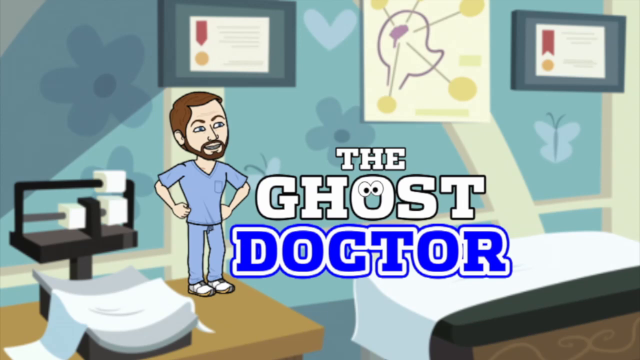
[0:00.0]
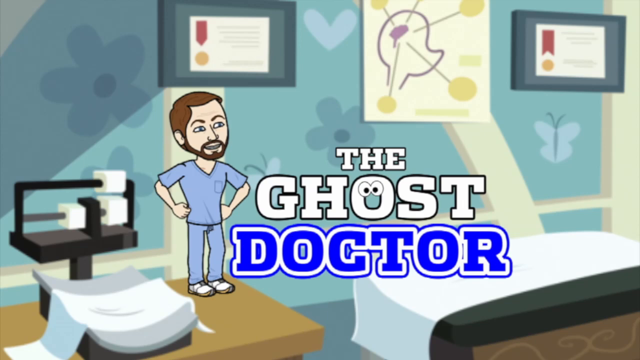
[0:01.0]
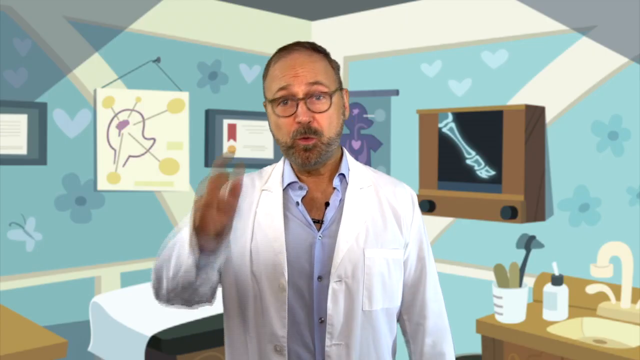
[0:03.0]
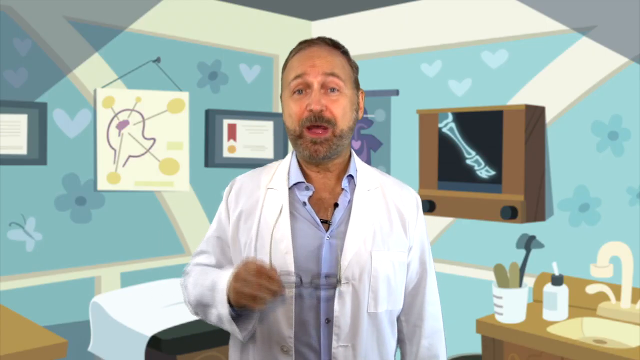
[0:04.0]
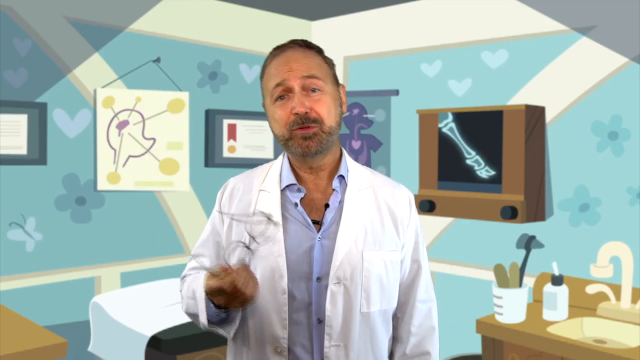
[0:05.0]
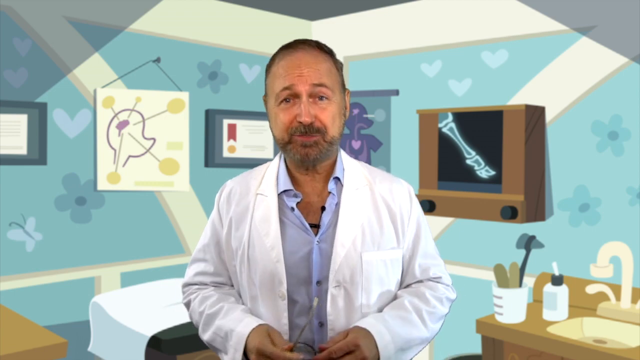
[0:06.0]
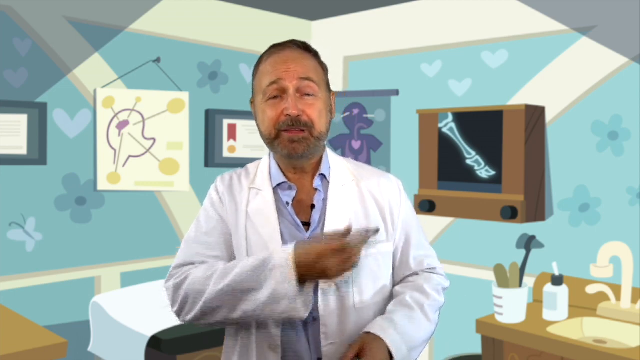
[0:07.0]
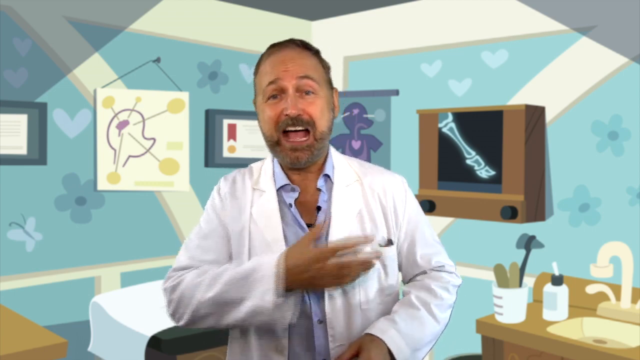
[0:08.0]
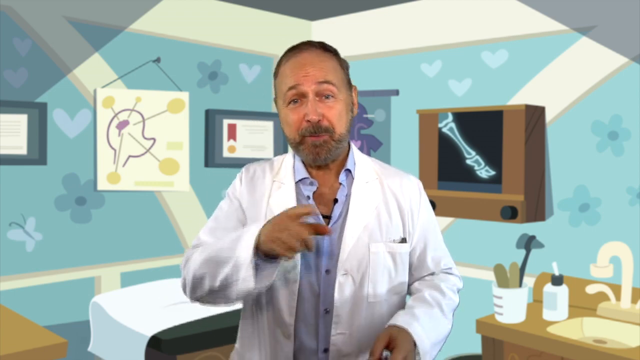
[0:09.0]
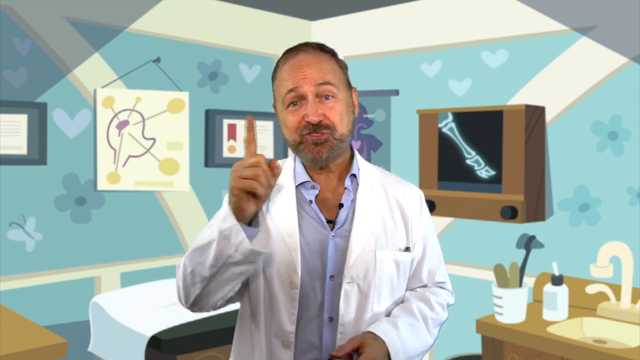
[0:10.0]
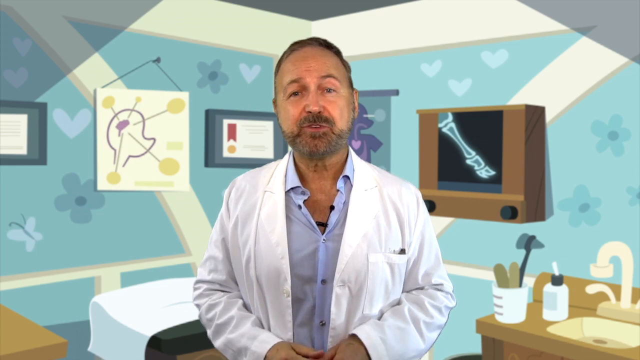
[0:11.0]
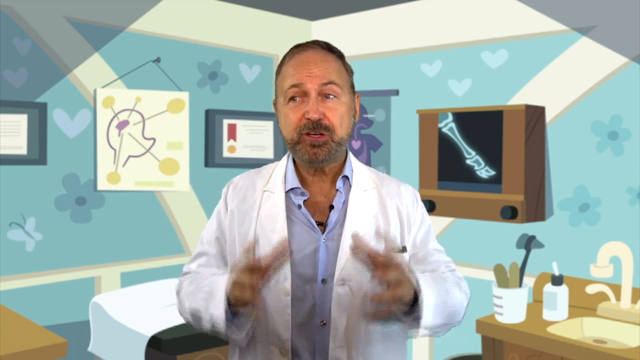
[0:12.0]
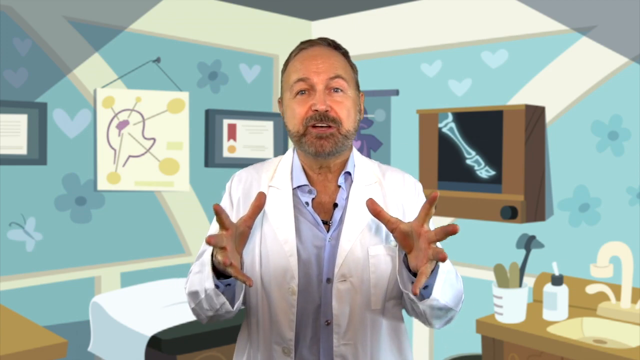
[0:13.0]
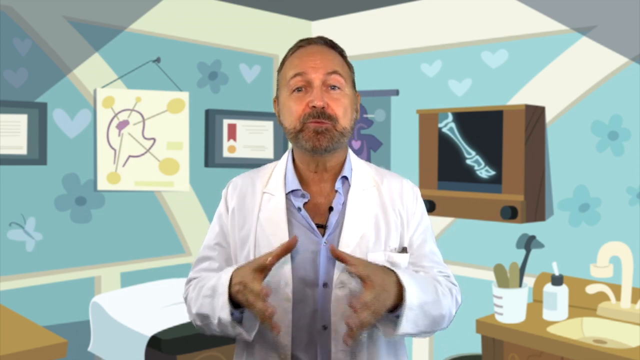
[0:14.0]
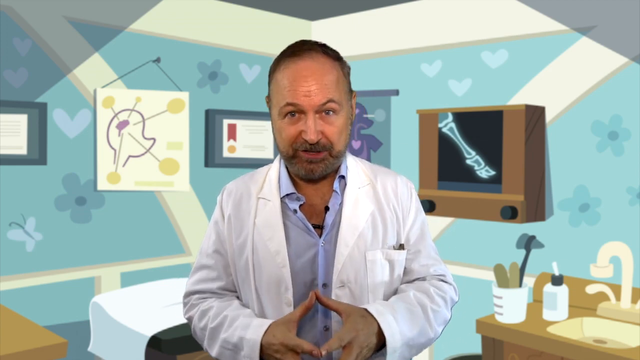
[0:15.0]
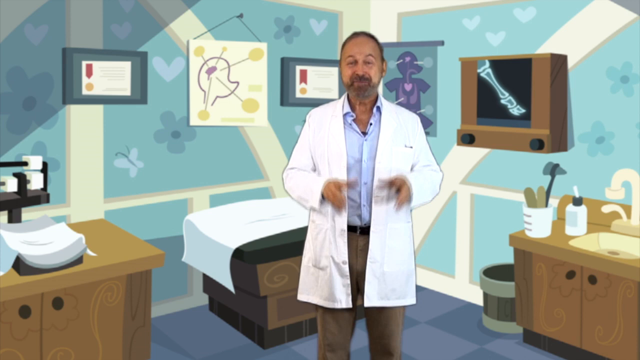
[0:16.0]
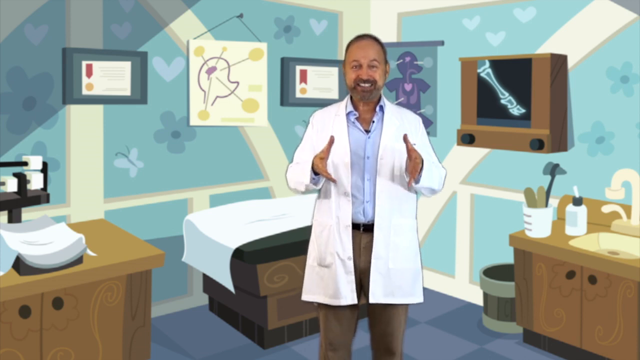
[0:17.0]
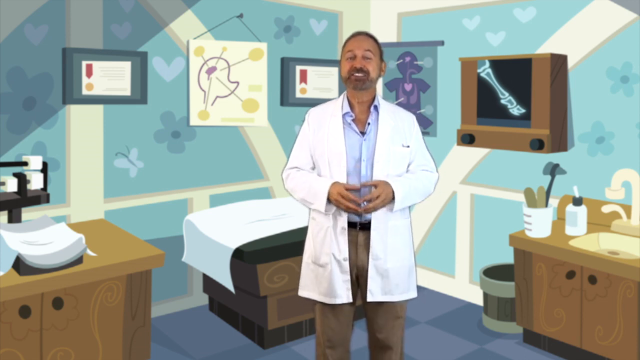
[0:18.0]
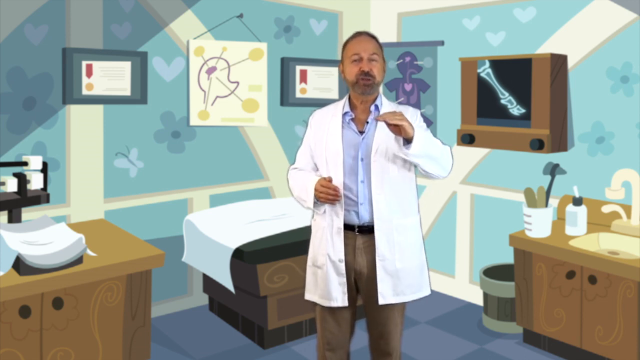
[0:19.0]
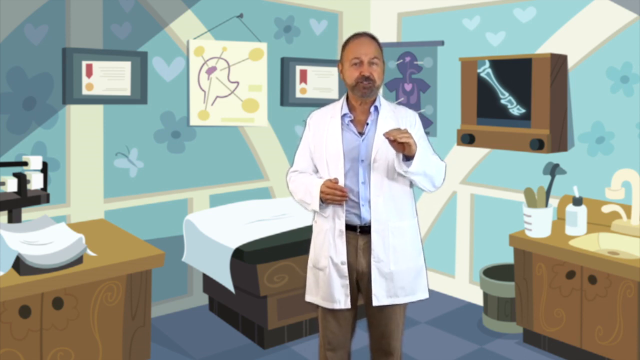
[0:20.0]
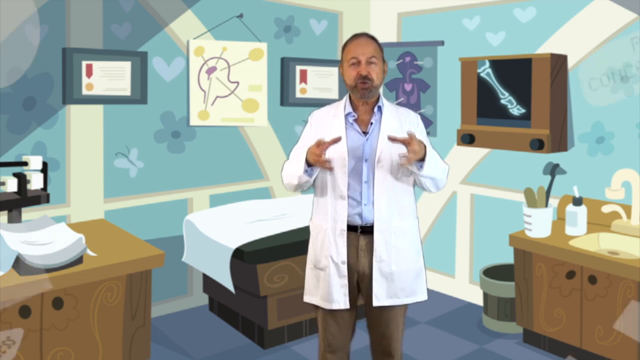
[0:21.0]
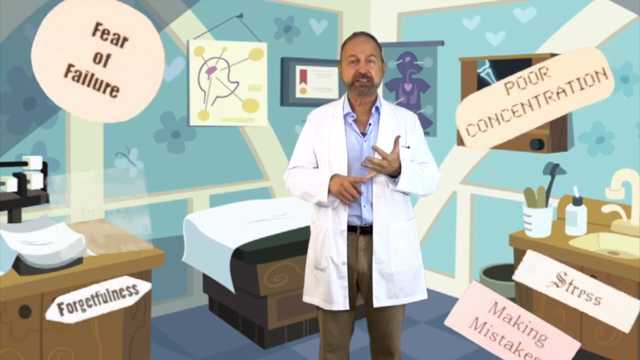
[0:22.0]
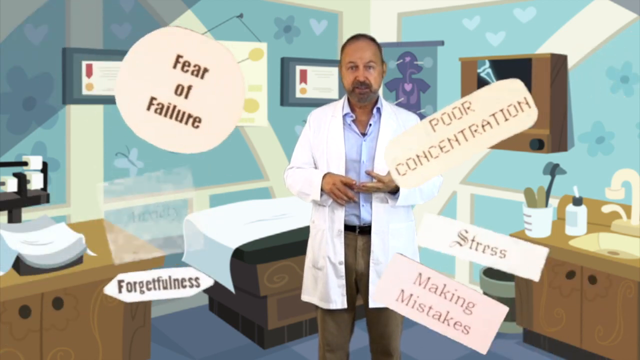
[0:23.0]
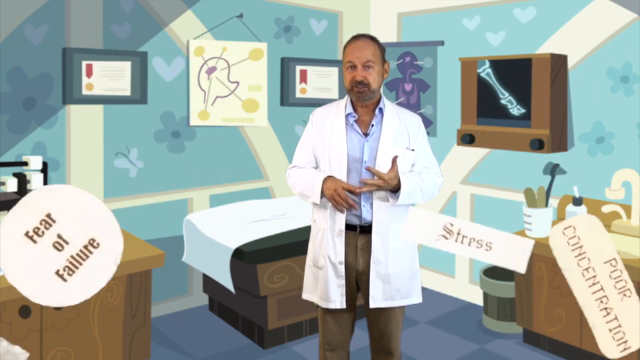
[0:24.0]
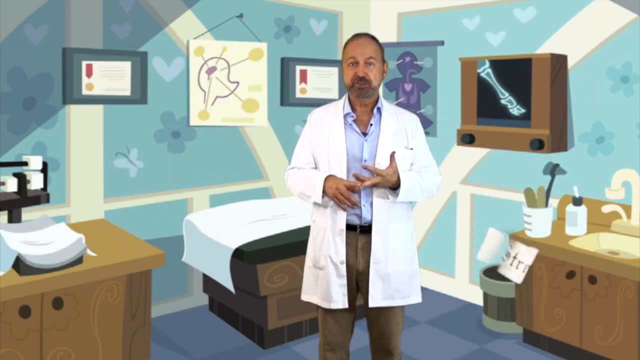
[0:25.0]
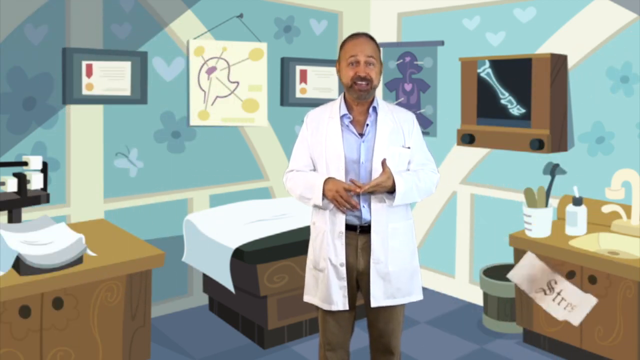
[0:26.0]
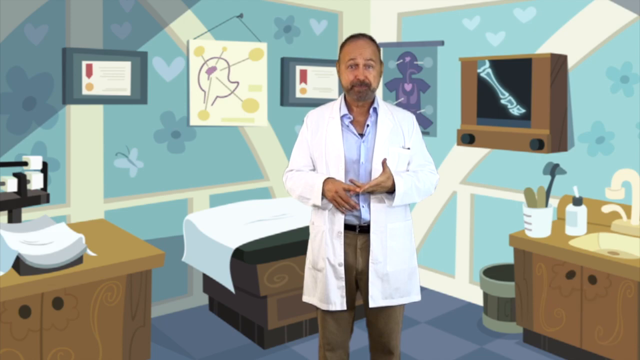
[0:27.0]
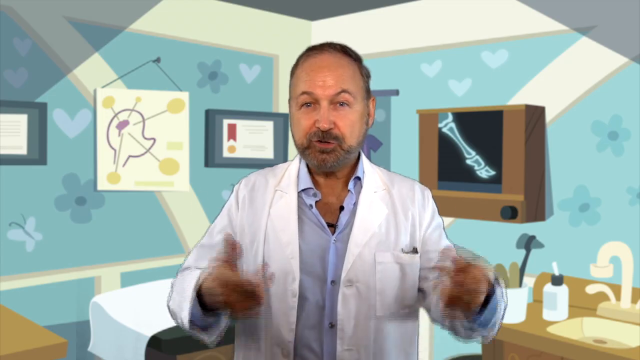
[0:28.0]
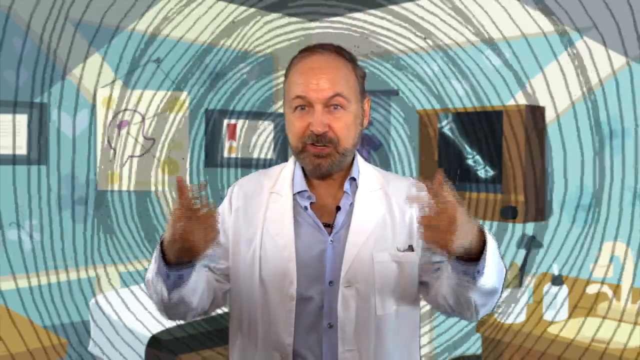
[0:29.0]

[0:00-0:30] A doctor explains how the human body looks, using statues. There is a desk behind, and the room has blue walls and is big enough. There is a water tap behind; inside the water tap there is a toothbrush and a washing bottle. There is a hook behind, and a container for keeping drugs and medicines. The carpet in the room is drafted.